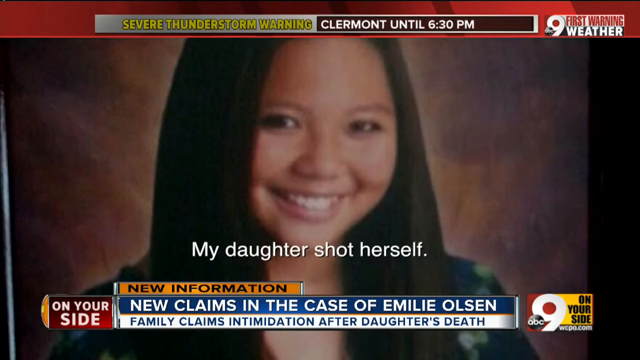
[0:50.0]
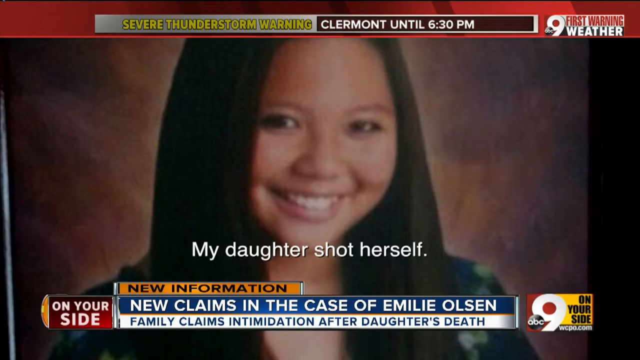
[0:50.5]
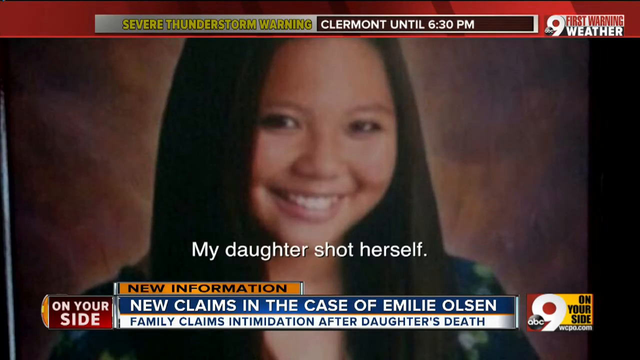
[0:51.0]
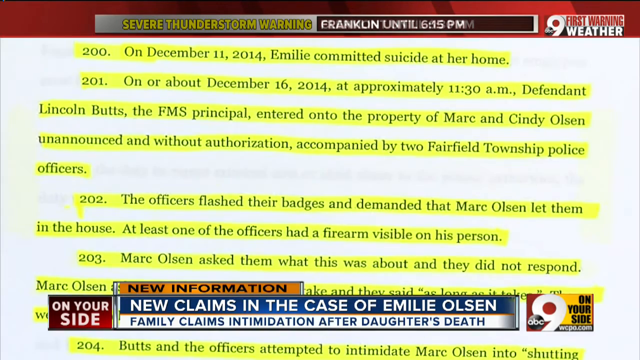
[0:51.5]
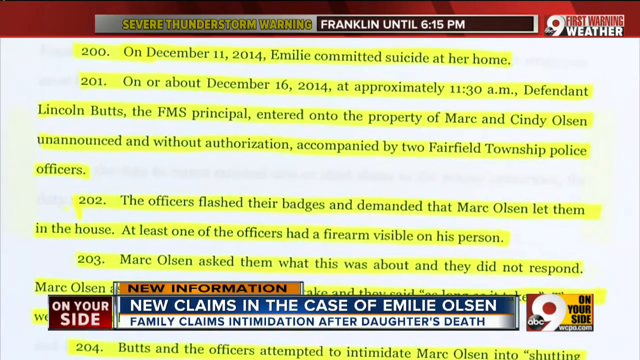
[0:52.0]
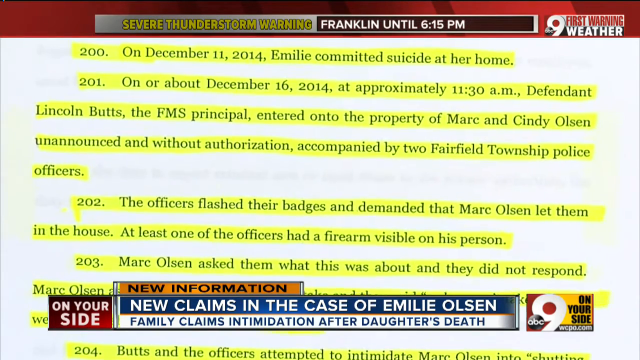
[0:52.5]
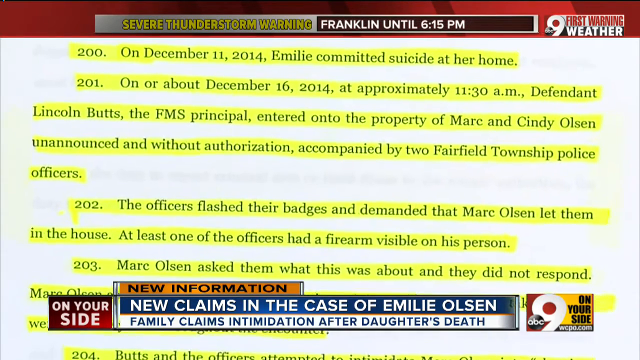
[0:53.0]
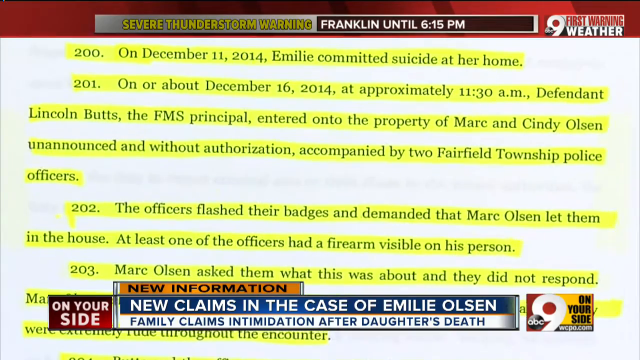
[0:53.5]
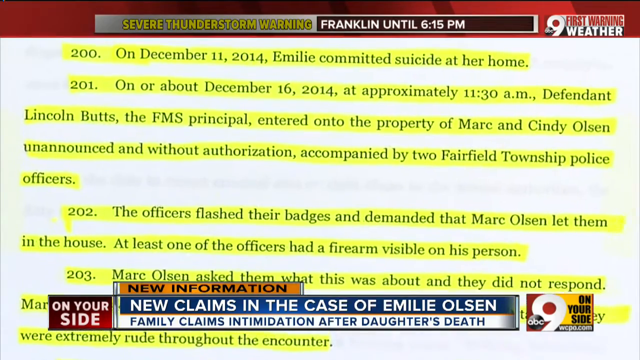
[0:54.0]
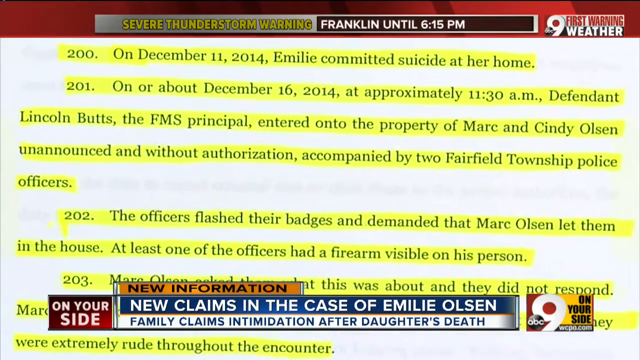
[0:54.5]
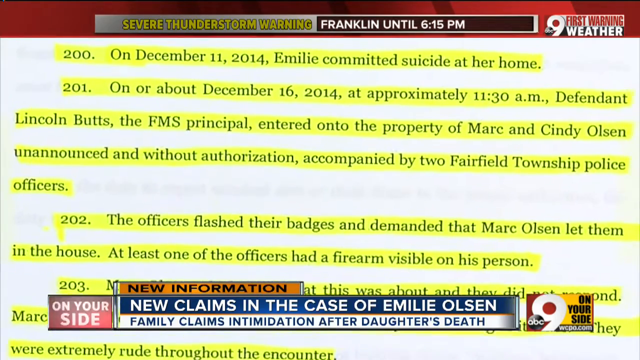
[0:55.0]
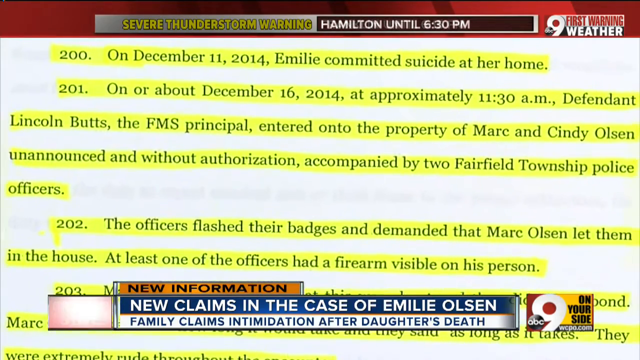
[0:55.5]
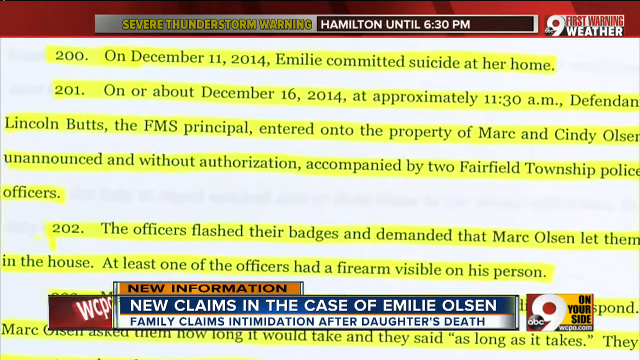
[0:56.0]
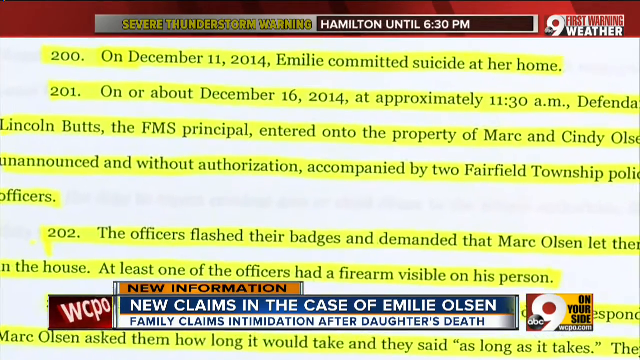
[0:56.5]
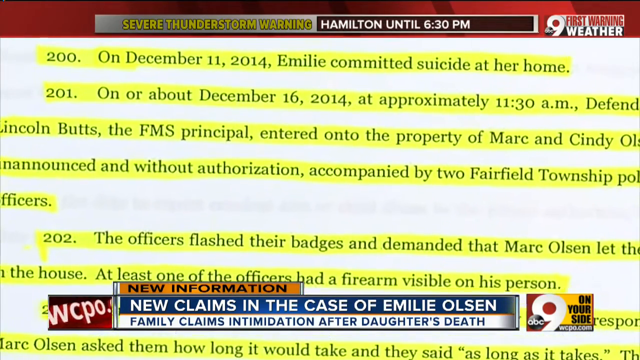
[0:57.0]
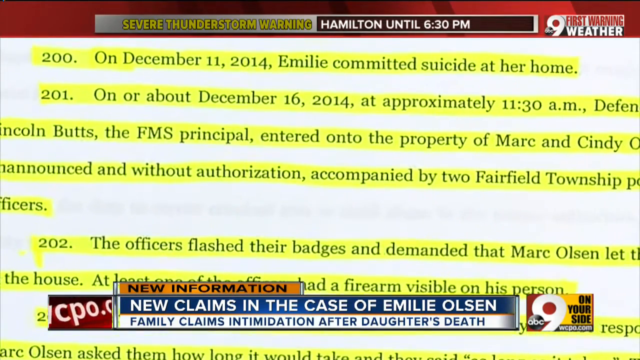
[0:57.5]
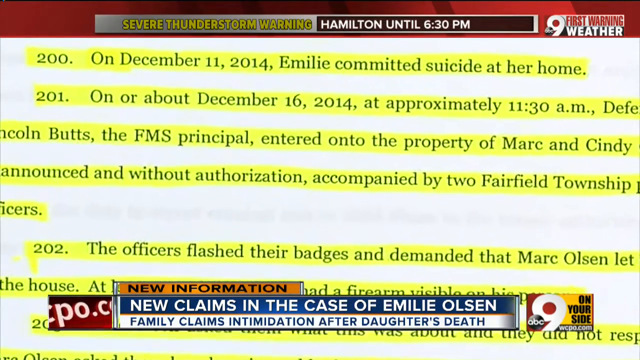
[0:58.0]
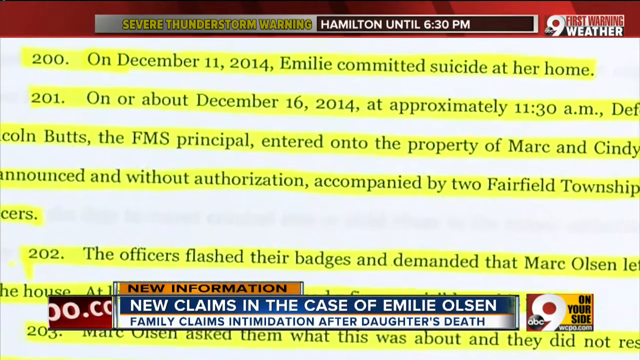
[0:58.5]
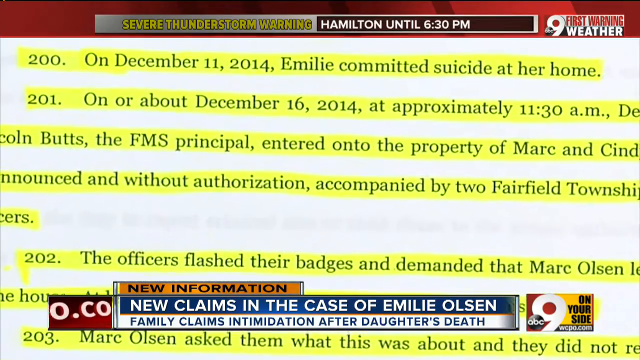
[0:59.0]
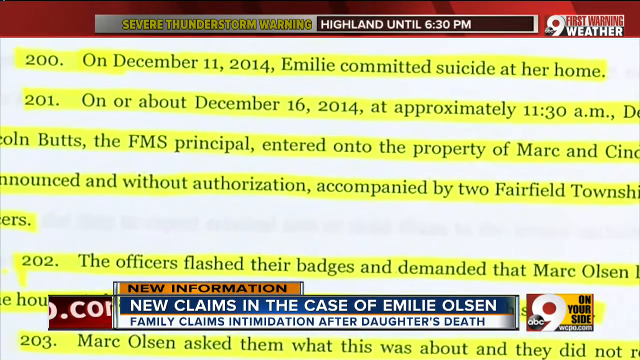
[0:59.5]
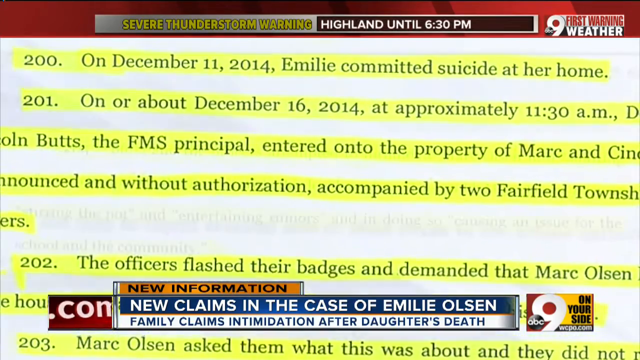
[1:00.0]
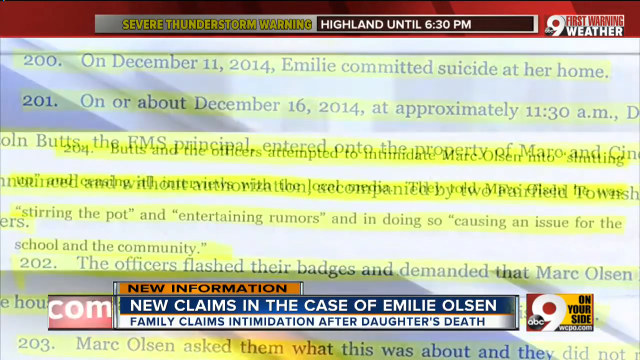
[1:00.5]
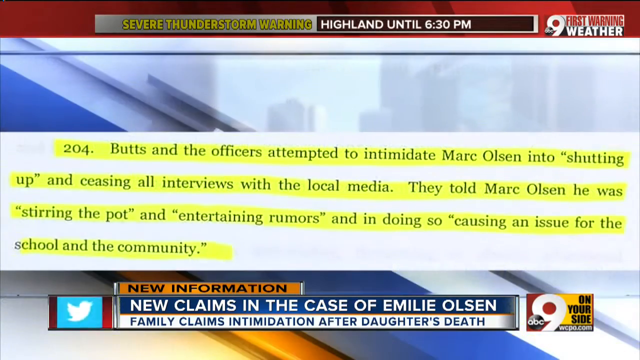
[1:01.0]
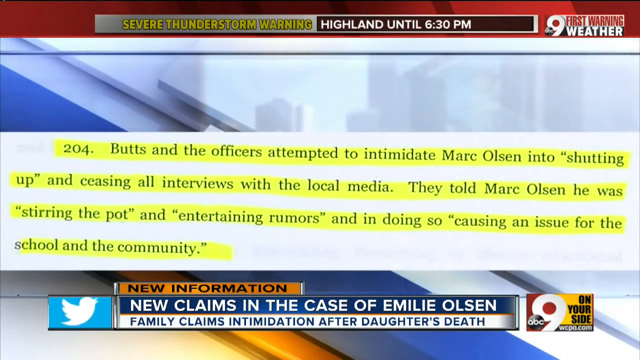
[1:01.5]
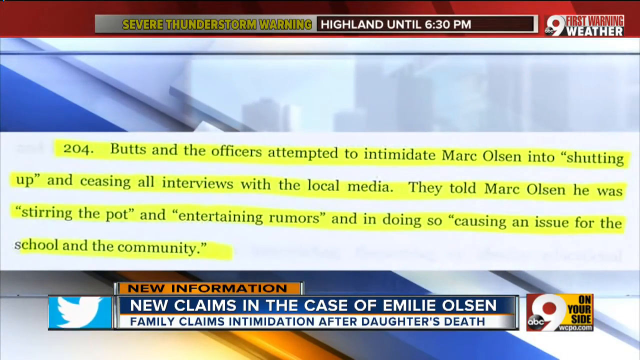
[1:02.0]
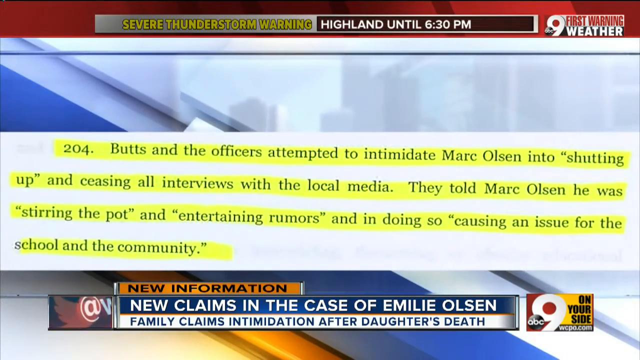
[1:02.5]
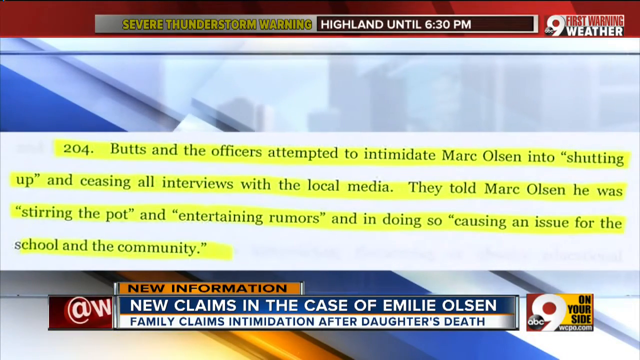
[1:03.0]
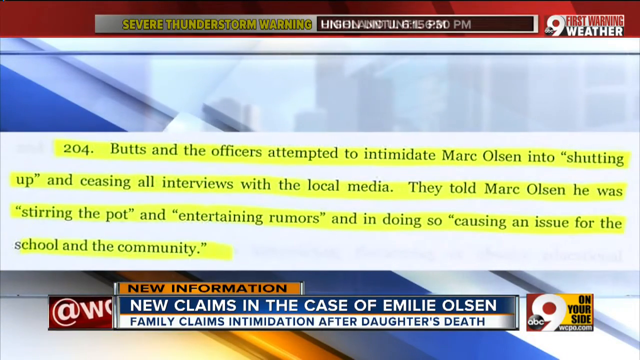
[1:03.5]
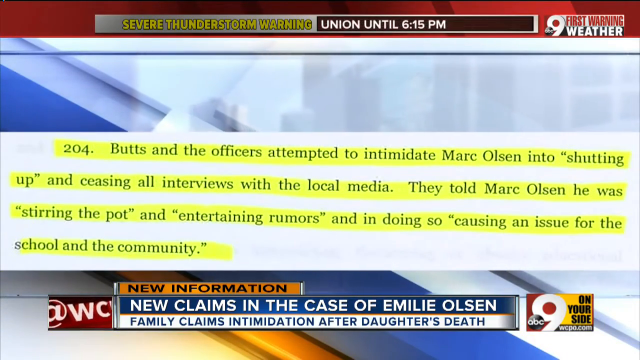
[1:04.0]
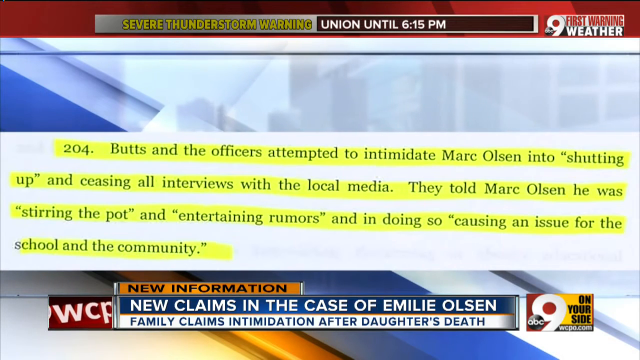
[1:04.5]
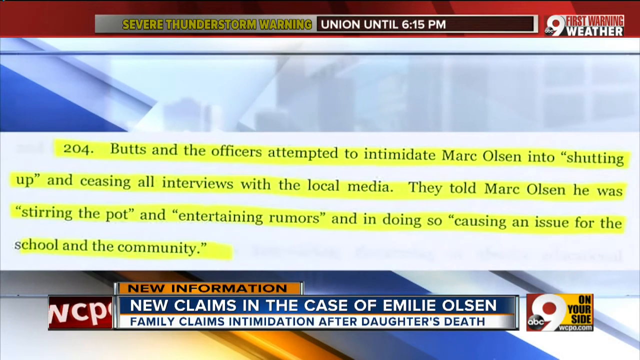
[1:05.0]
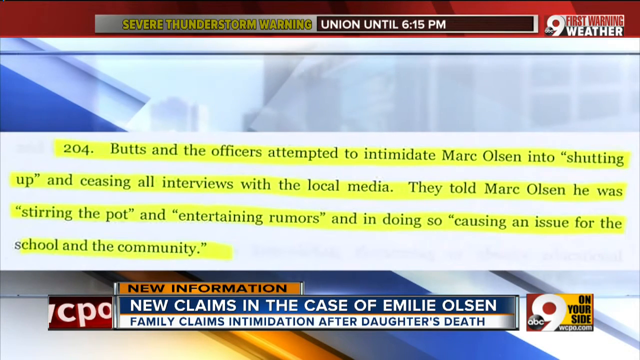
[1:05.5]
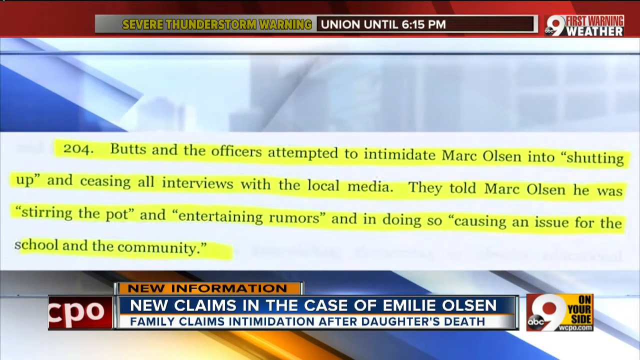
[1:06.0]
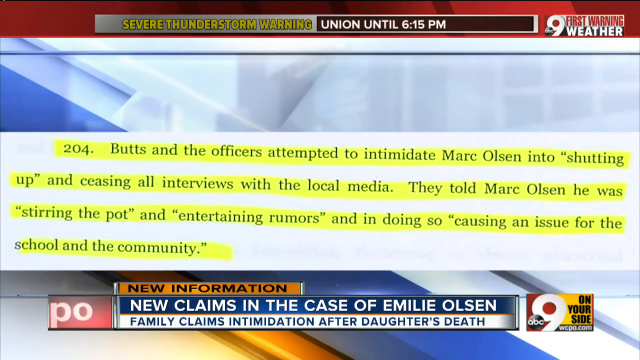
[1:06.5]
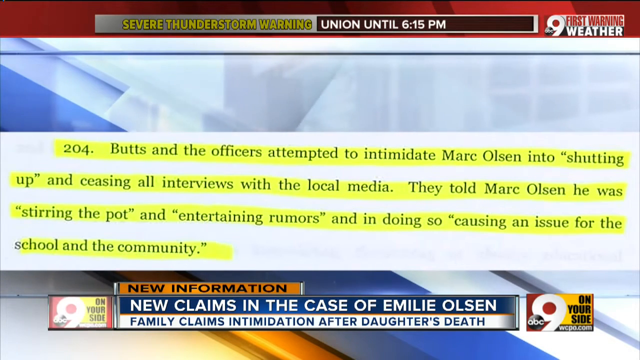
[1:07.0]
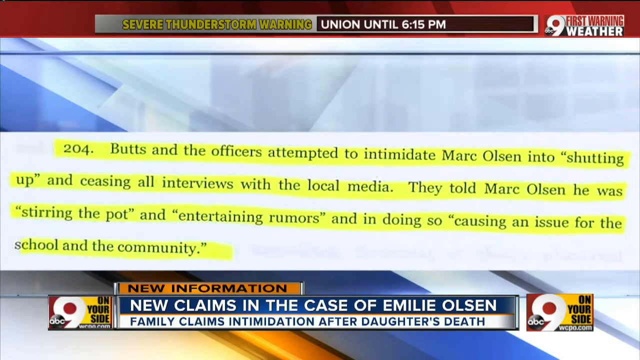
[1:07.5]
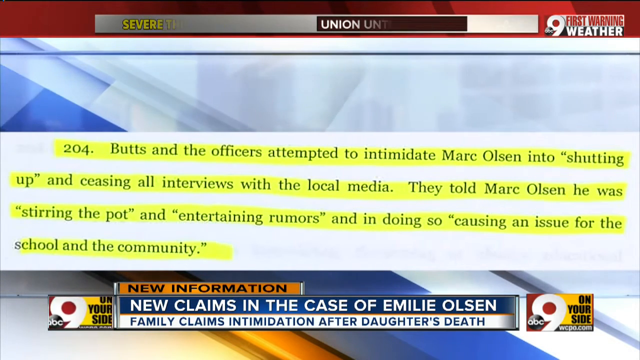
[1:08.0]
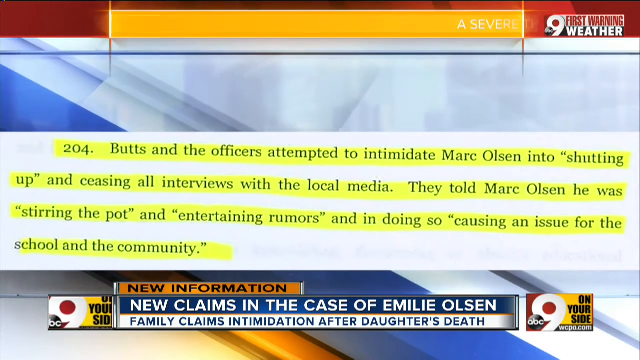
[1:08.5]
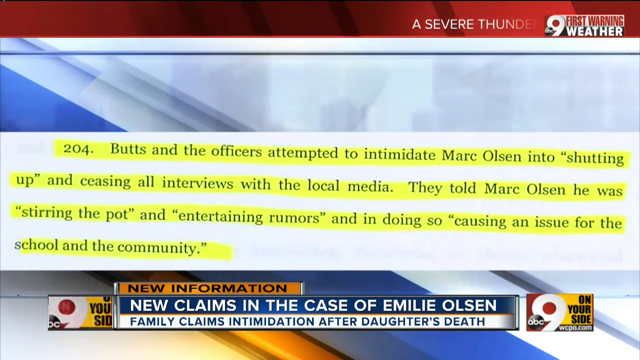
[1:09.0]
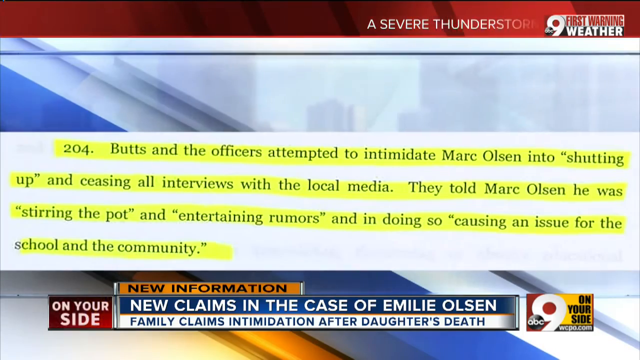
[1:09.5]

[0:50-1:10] The woman with black hair continues to appear, followed by text highlighted in yellow on a white background. The text includes "the officers attempted to intimidate Mayor Olson into shutting up" and "that he was stirring the pot and entertaining rumors". The video moves between a few different screens of the news-style coverage, returning to the yellow-highlighted text and zooming in on a line beginning "they told Mark Olson he was".